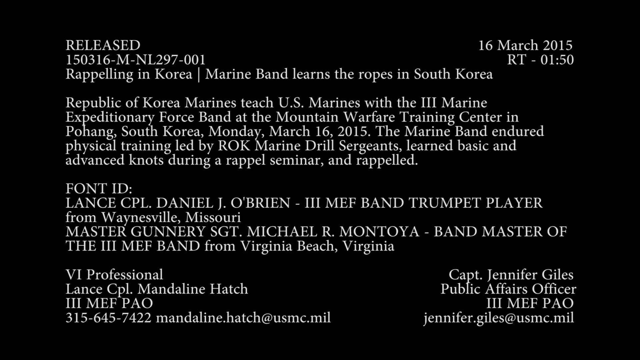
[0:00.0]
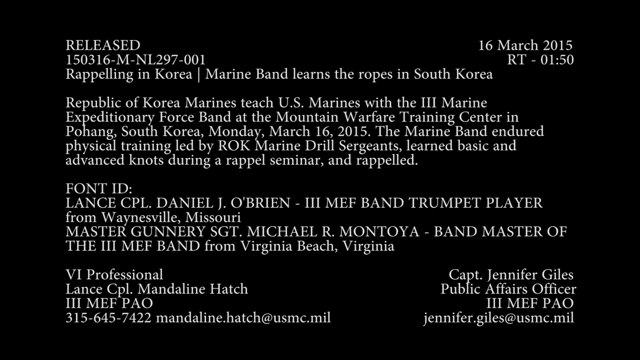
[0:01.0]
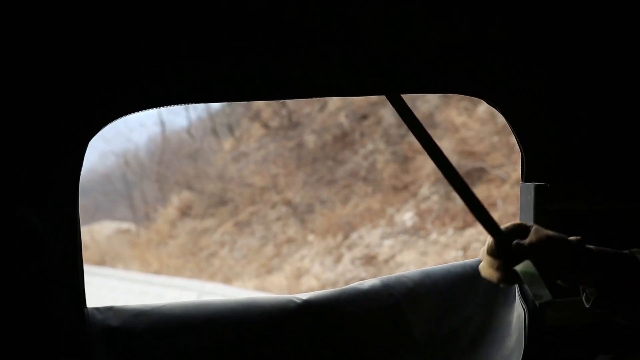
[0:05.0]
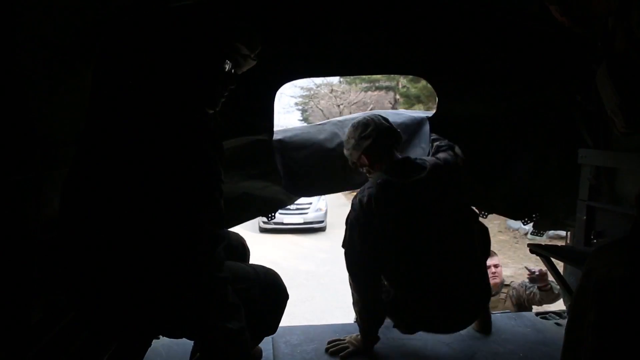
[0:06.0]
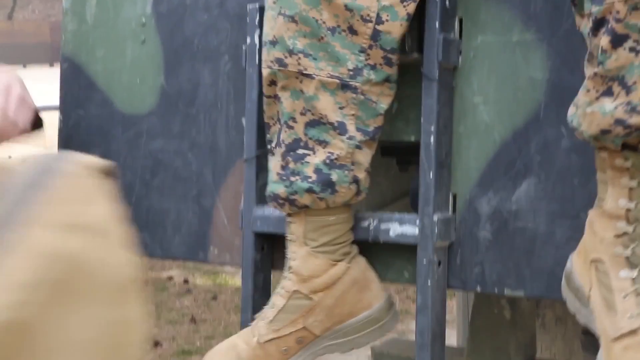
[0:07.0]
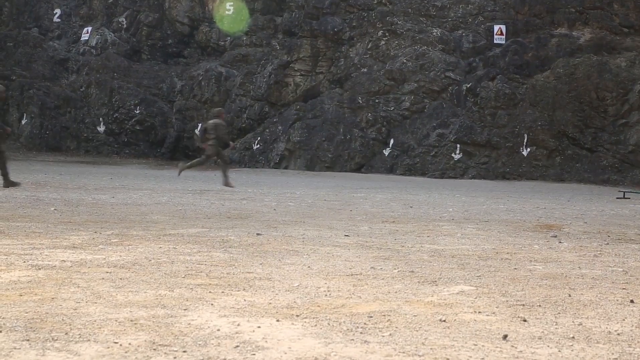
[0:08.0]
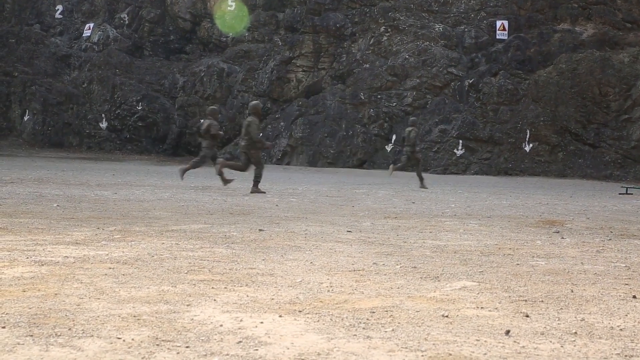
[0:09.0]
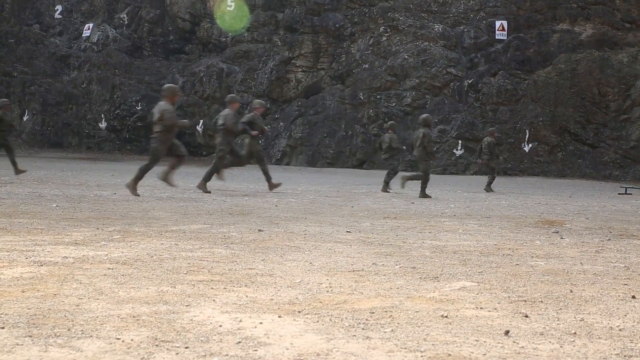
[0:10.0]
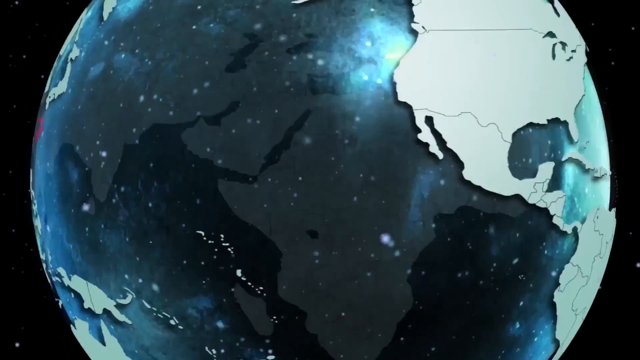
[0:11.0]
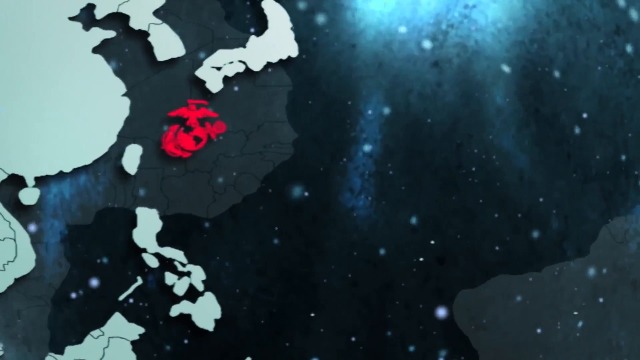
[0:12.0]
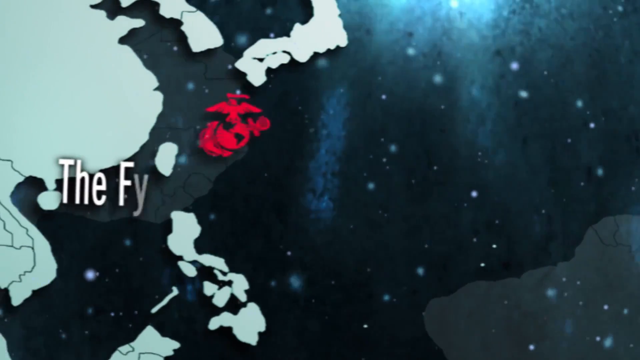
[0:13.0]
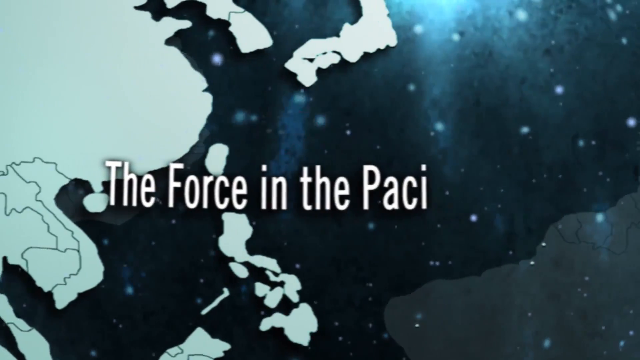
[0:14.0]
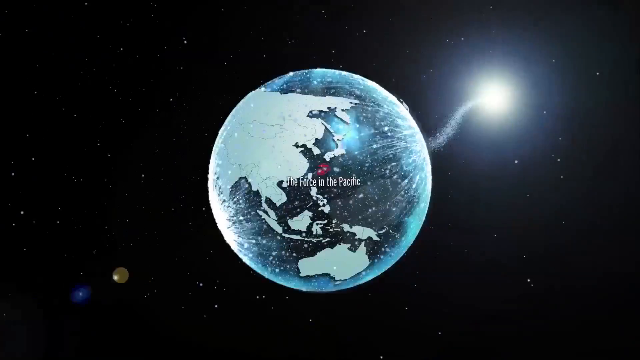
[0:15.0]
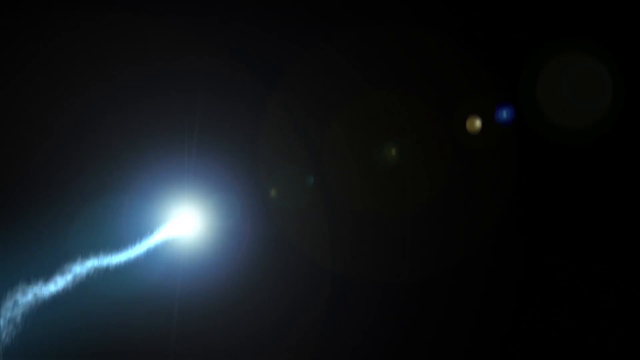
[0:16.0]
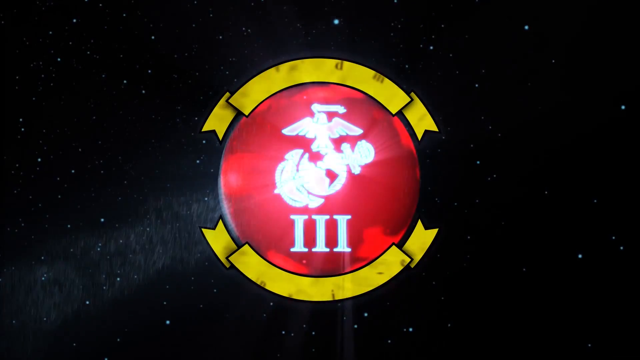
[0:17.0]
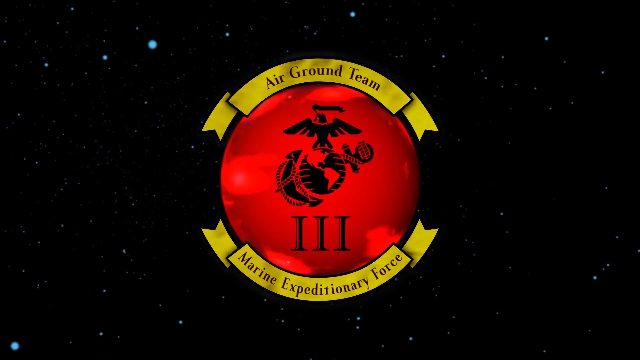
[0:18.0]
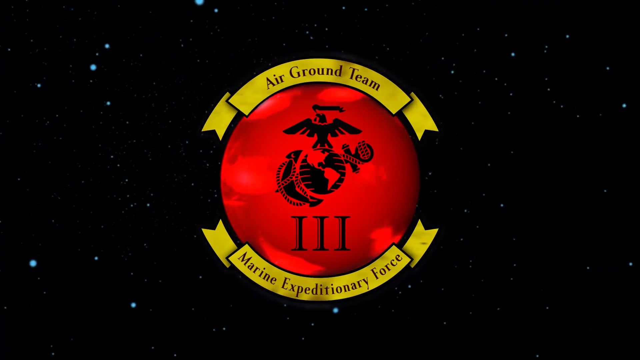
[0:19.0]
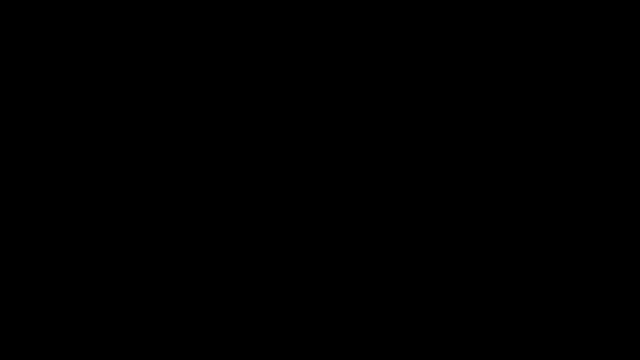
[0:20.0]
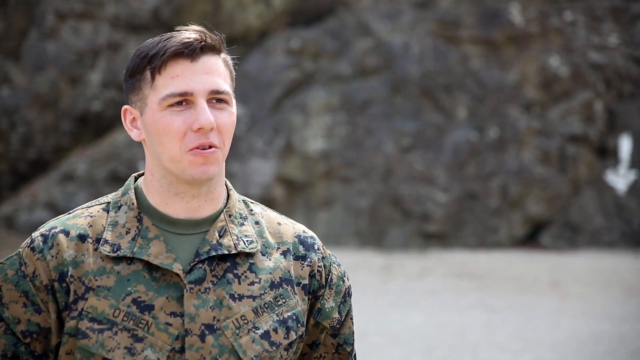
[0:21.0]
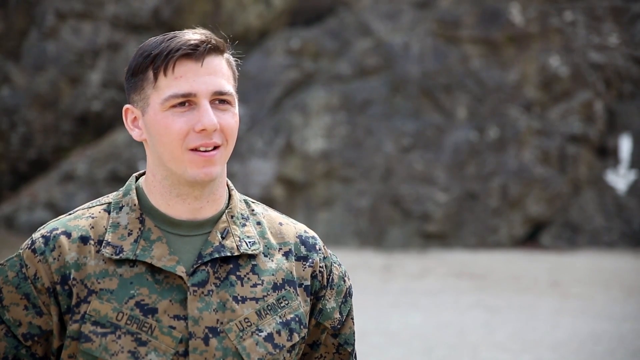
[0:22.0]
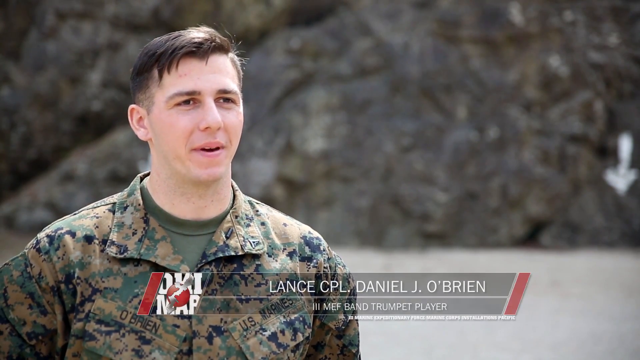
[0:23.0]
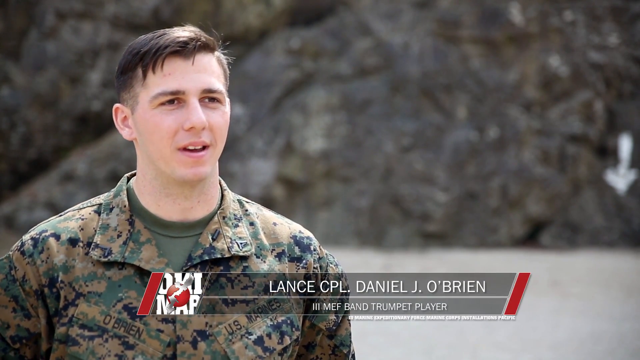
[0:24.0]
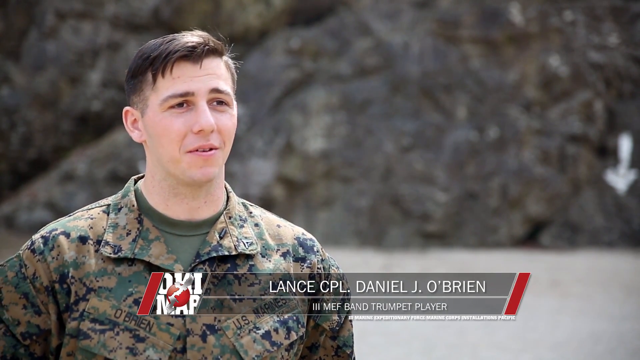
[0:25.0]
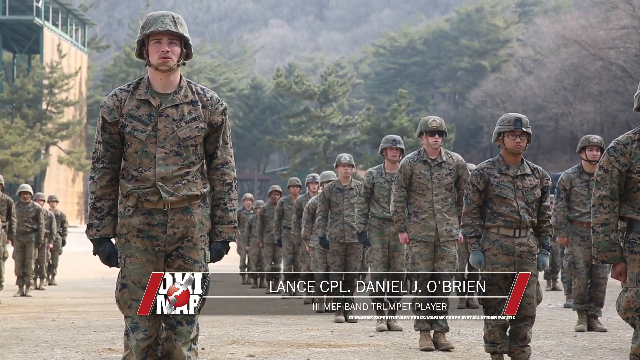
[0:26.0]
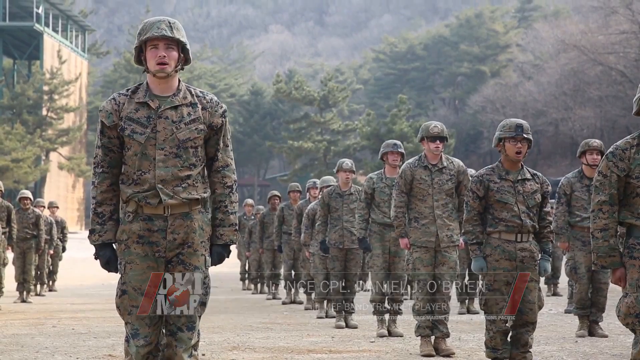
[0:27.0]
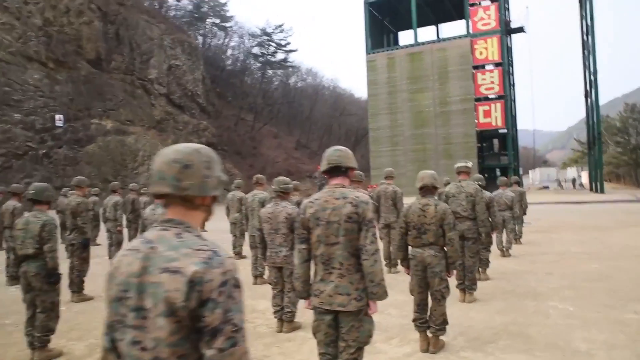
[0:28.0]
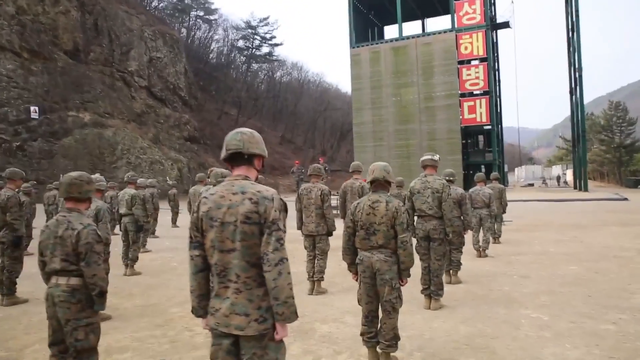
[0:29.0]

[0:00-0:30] The video opens with a title page reading "Marine Band Learns the Ropes in South Korea," dated 16th March 2015. The text says "the Republic of Korea Marines teach U.S. Marines with the 3rd Marine Expeditionary Force Band at the Mountain Warfare Training Center in Pohang, South Korea." A shot taken from inside a vehicle, either moving or stationary, shows soldiers undoing the back flap and exiting the vehicle. They wear camouflage uniforms and boots. A group of three soldiers runs across open ground towards a large rock wall in the background. The rock wall has white arrows pointing towards the ground at its base, and the soldiers, joined by more soldiers, all run towards them. A moving globe highlights in red the soldiers' icon with an angel and an anchor in red; the caption says "the force in the Pacific" and shows them located in the Pacific Ocean. Next comes a dark sky with stars and the Air Force logo: a white angel and anchor and "Third" in a red sphere, surrounded at the top and bottom by gold ribbons. The top ribbon says "Air Ground Team" and the bottom ribbon says "Marine Expeditionary Force." A soldier in camouflage uniform talks to the camera in front of the rock face; he is Lance Corporal Daniel J O'Brien, a trumpet player in the band. The next shot shows a parade ground with a platoon of soldiers, who shout. They are standing in front of a tower.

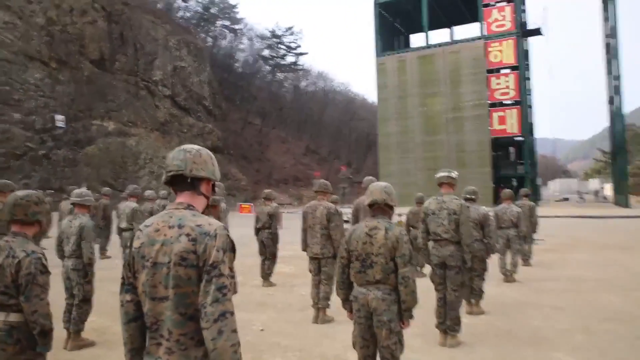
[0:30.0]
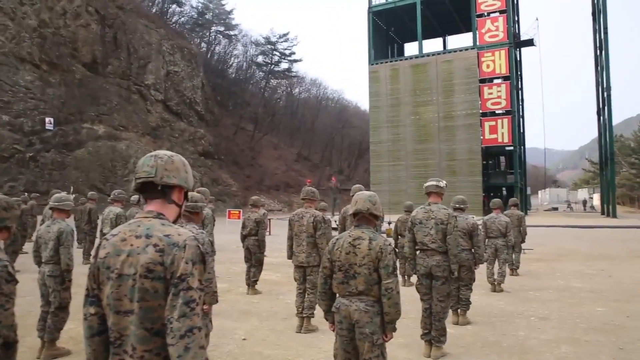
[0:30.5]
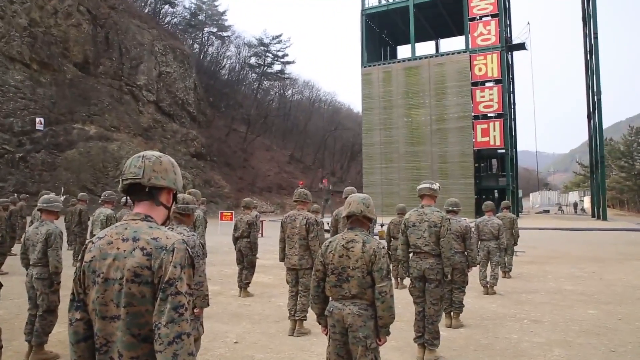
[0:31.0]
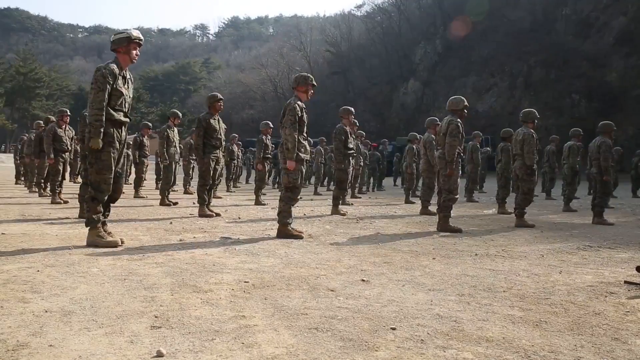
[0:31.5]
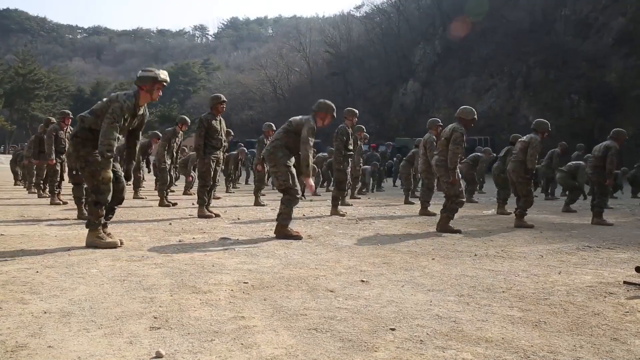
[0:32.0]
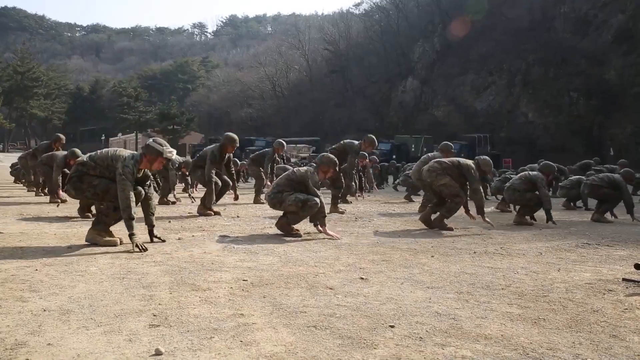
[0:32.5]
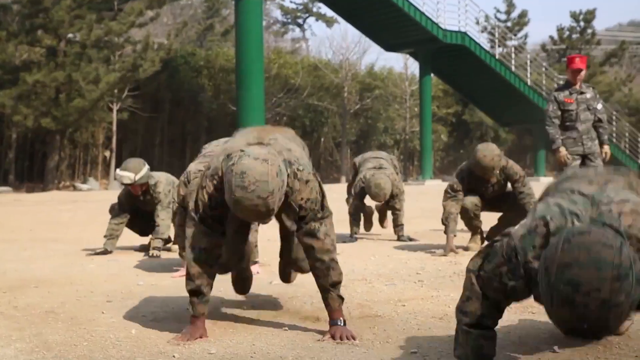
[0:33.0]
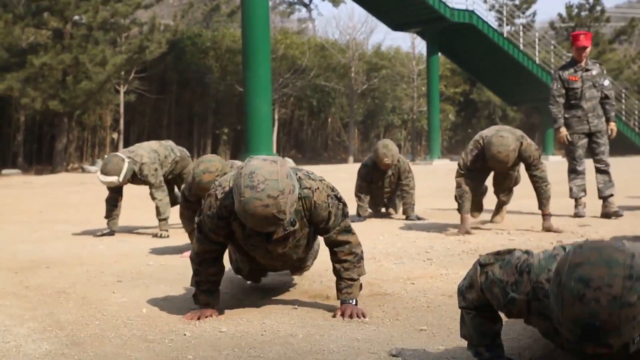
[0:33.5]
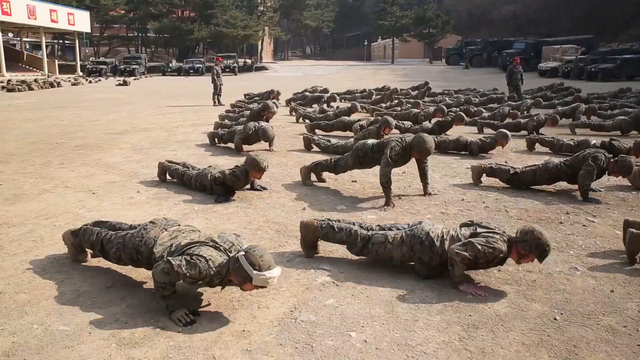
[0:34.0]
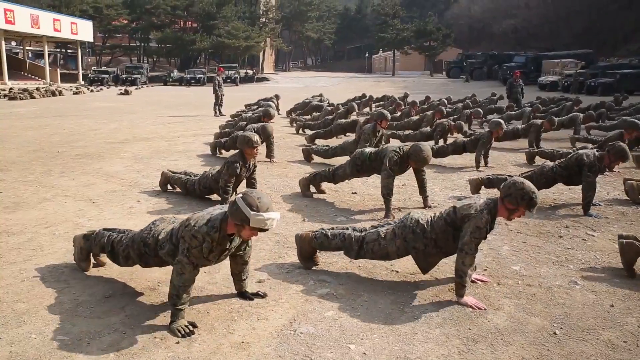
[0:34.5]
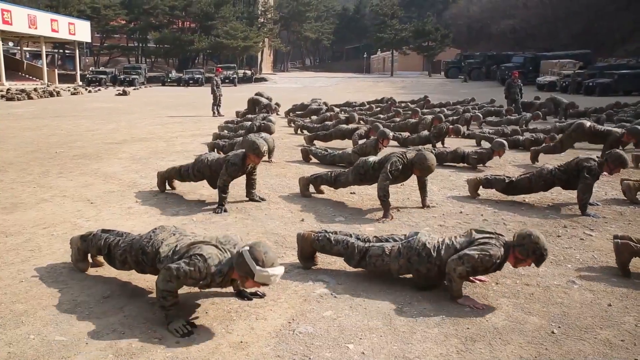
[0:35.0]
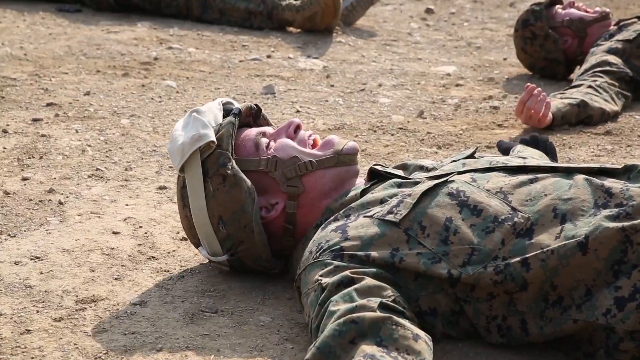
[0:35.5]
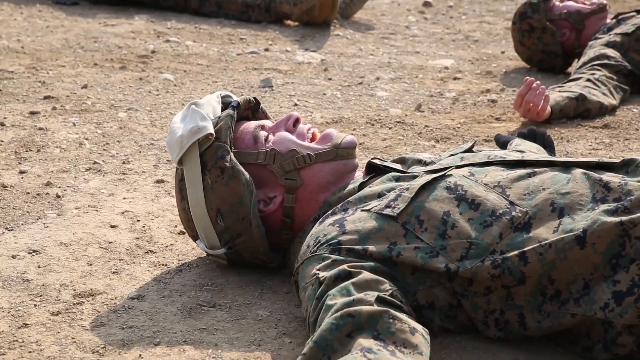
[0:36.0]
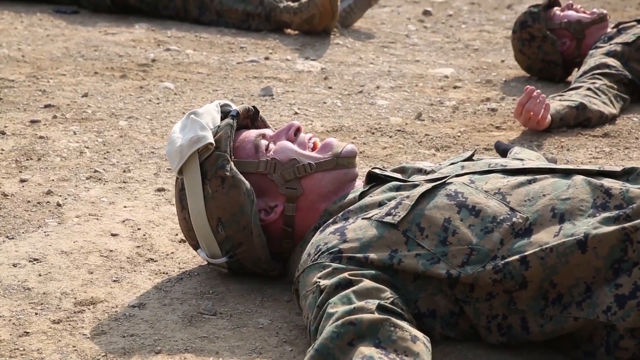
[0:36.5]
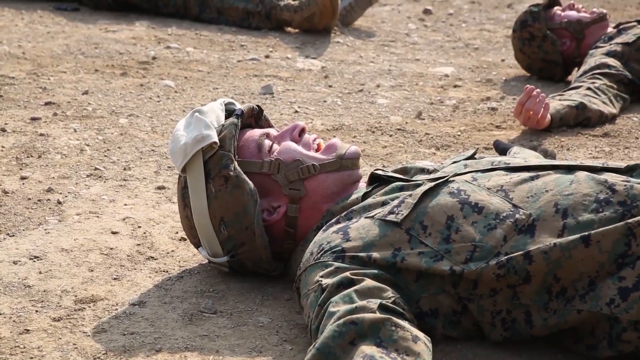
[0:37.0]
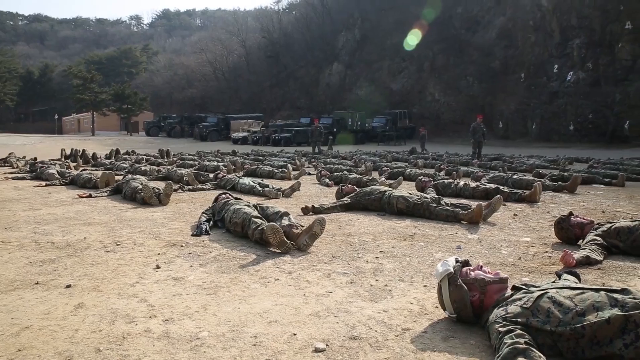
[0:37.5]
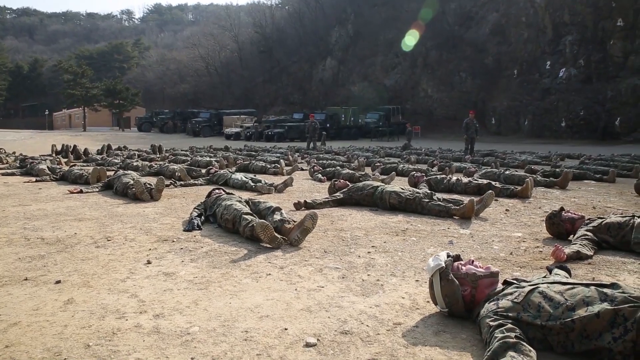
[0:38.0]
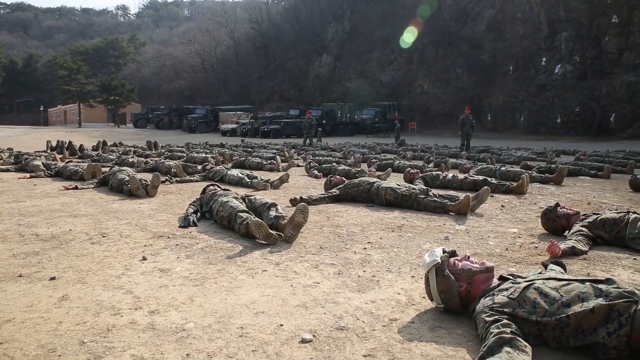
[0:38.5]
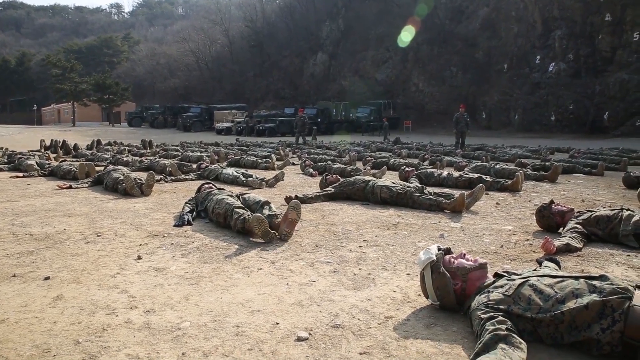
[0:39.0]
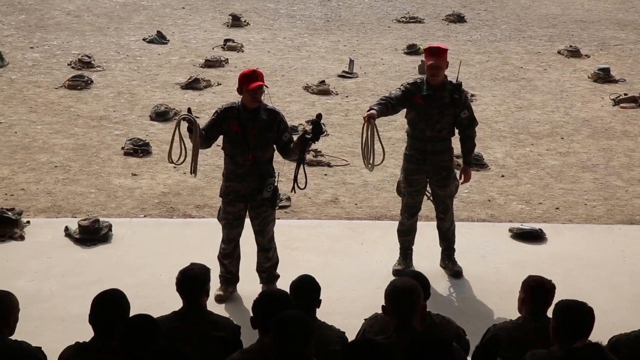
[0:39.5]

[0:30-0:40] The soldiers are on the parade ground, standing in front of the tower and next to the large outcrop of rock. A soldier jumps into the foreground. The shot pans to show the soldiers crouching down on the parade ground, doing squats and press-ups, and then lying flat on the ground. A group of soldiers watches two other soldiers with red caps in front of the parade ground. One holds a bunched rope in his right arm, and the other holds a rope in his right arm and another rope in his left arm. They are instructing the group of soldiers.